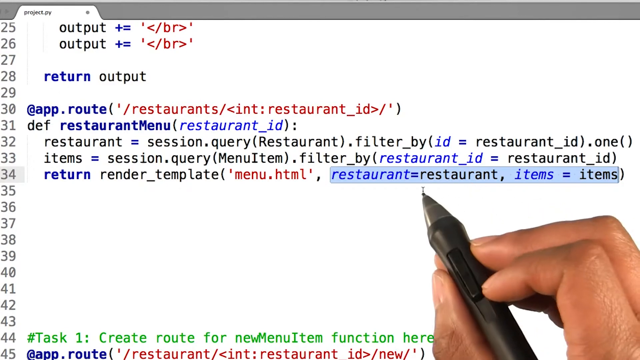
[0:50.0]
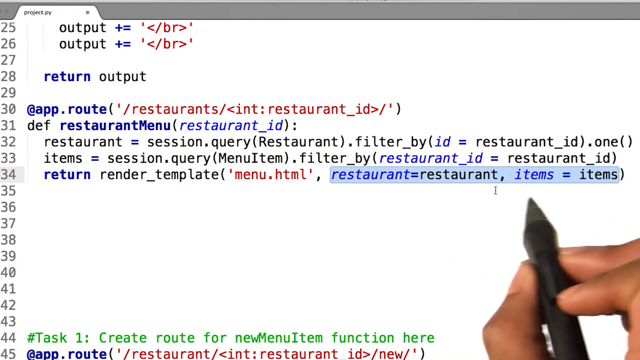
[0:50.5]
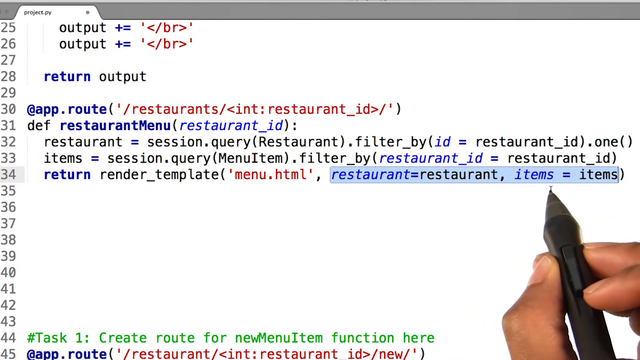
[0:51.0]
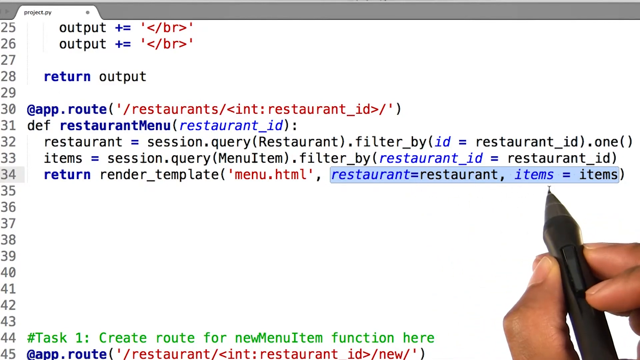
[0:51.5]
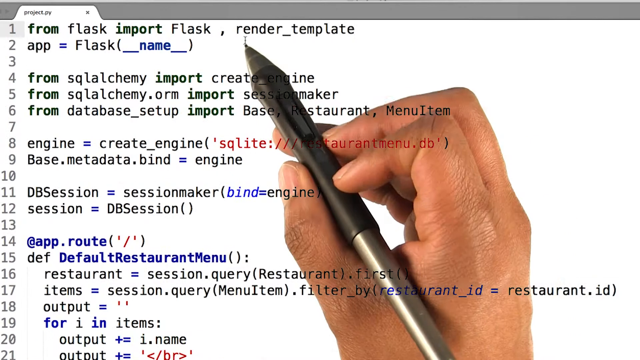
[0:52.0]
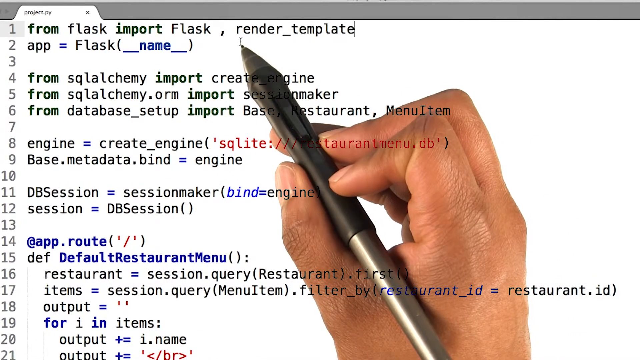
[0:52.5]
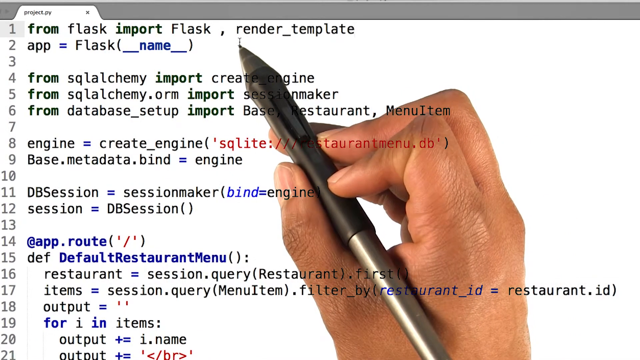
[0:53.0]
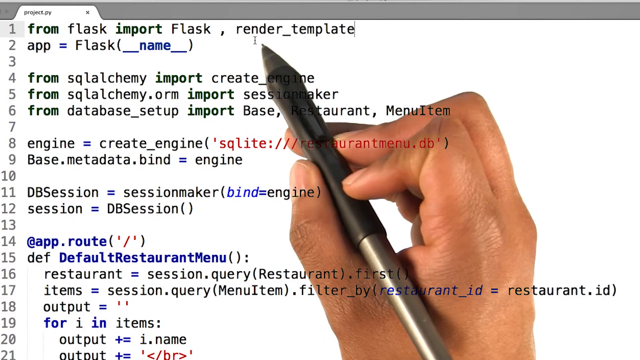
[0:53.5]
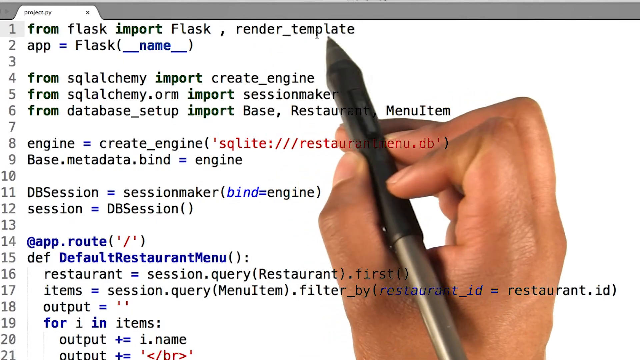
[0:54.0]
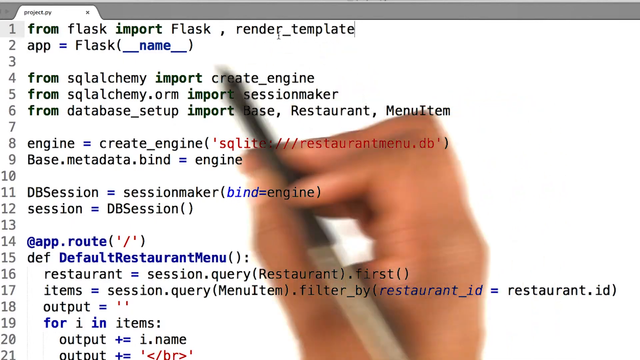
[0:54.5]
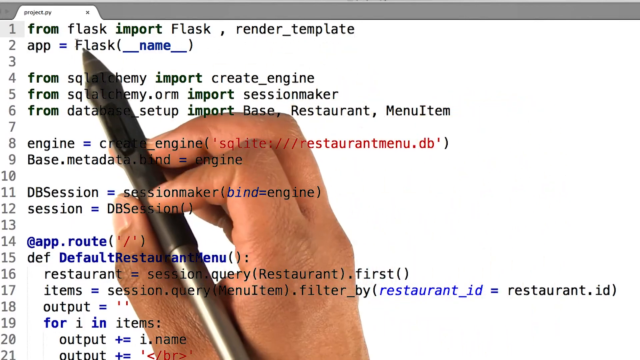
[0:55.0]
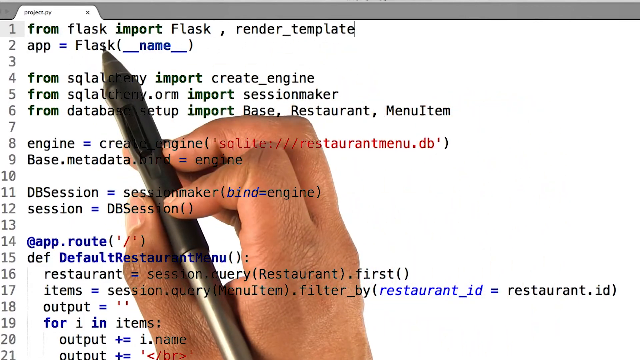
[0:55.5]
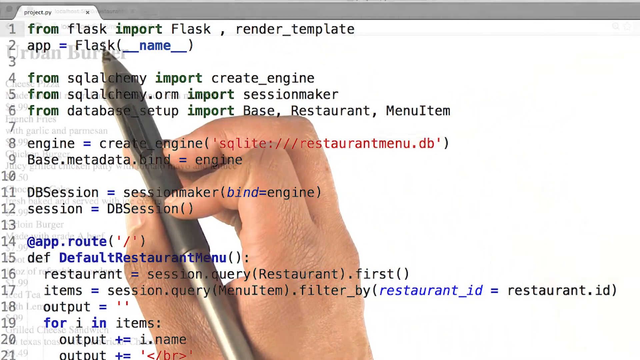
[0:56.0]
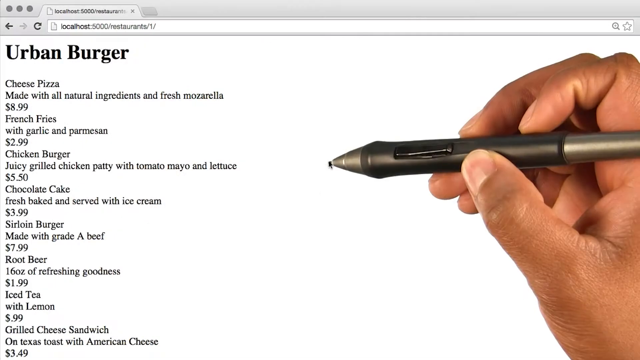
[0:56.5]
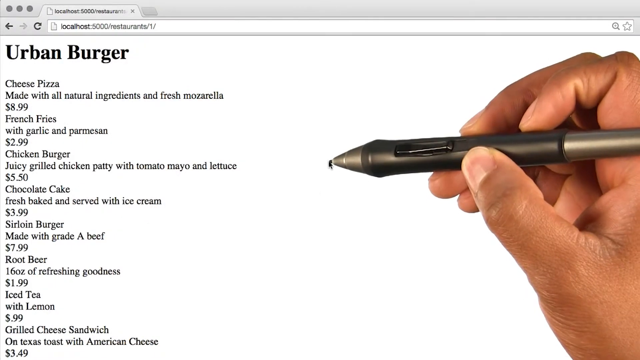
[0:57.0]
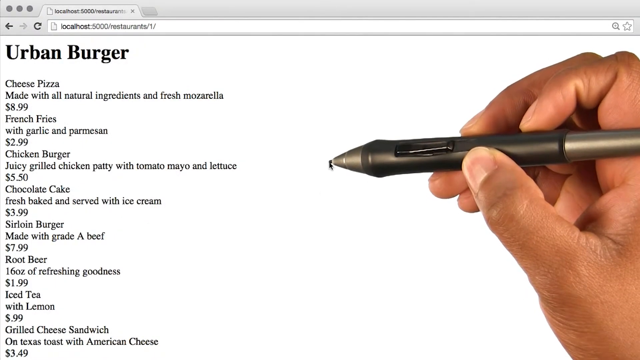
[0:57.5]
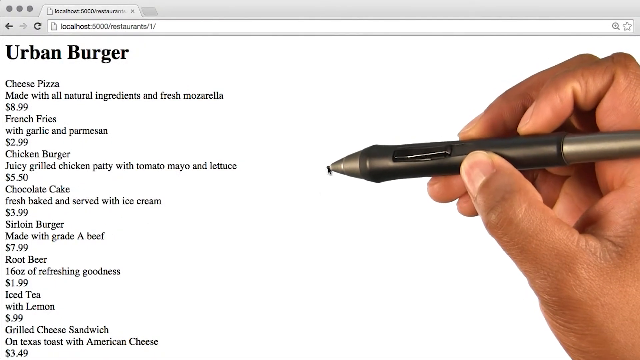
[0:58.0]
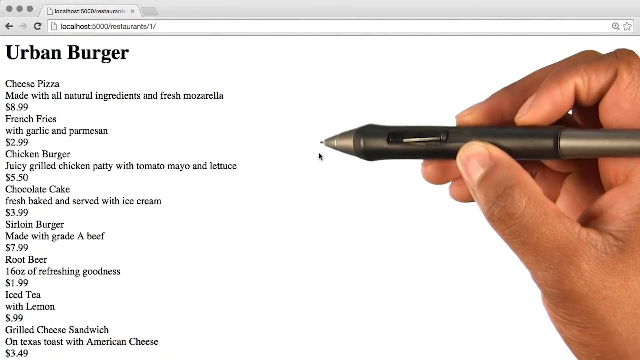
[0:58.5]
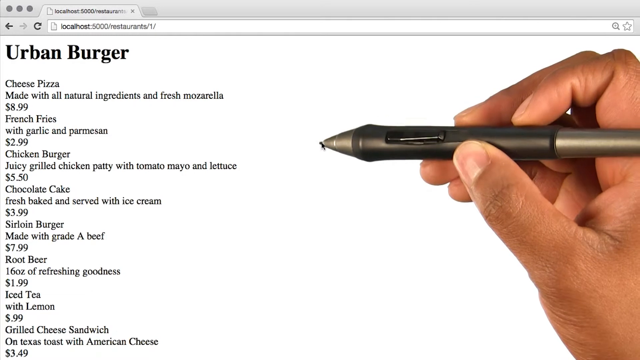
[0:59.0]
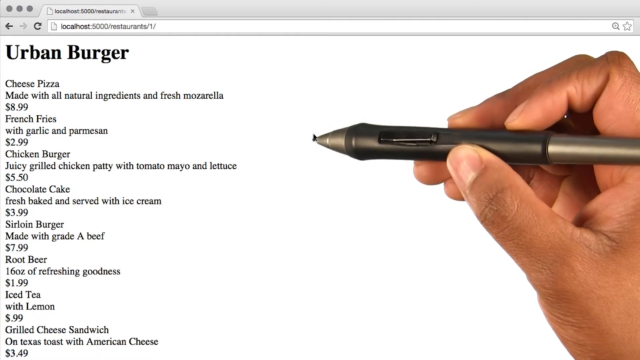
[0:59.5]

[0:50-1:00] The screen shows the code and the pen with the hand overlapping: the pen is on the background plane and the code on the next plane, so they look like they are on top of each other. Parts of the code are underlined one by one. In the notepad, items are selected one by one, and the content relates to the restaurant.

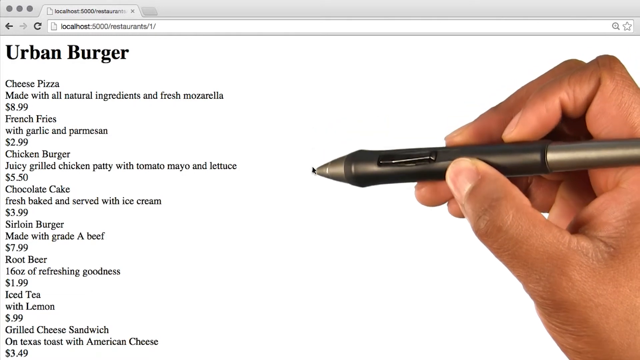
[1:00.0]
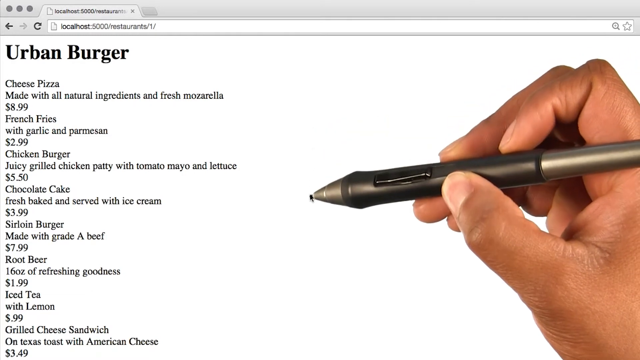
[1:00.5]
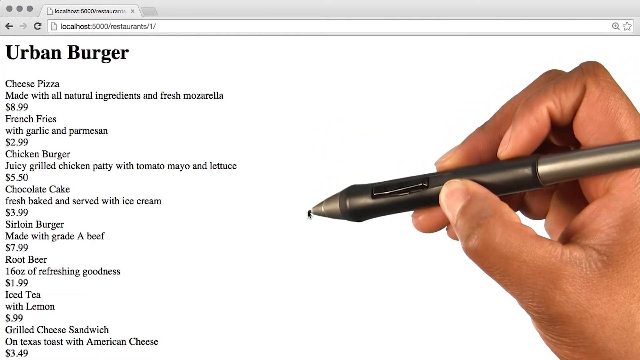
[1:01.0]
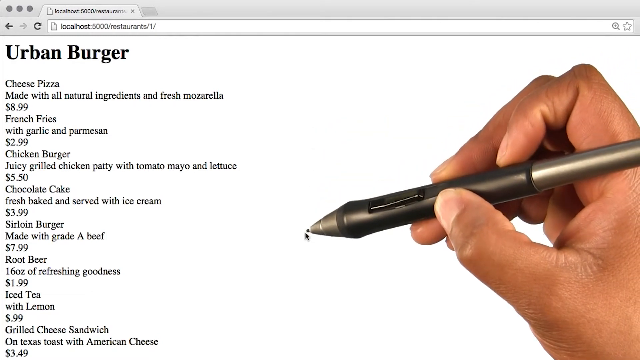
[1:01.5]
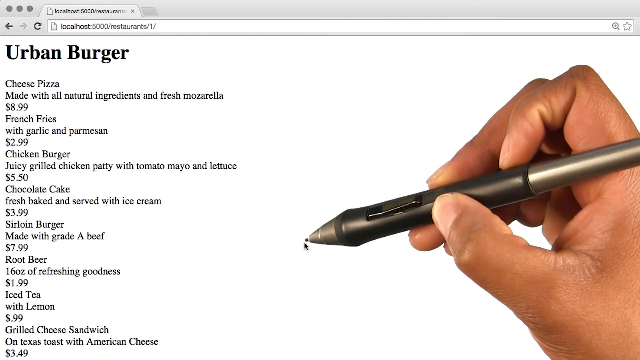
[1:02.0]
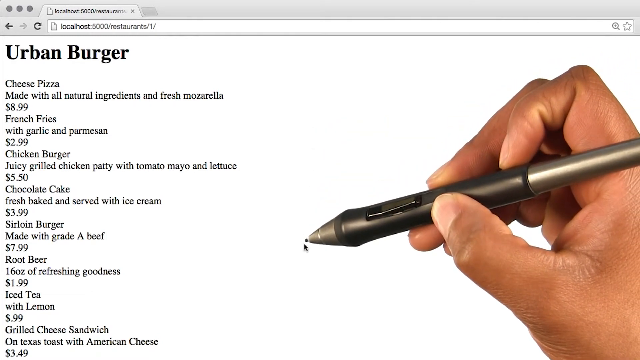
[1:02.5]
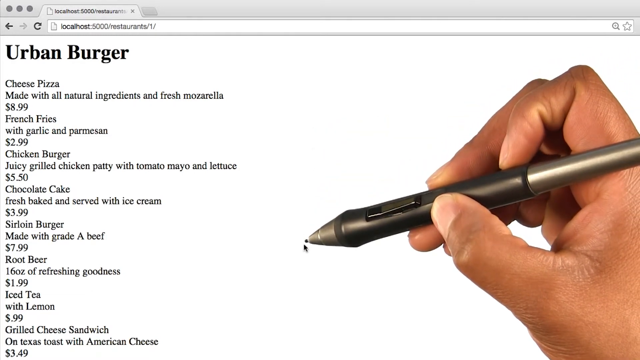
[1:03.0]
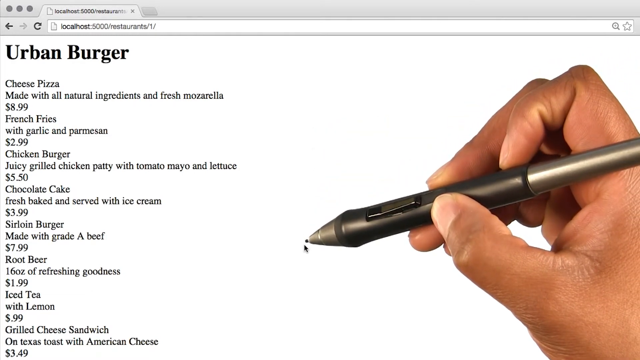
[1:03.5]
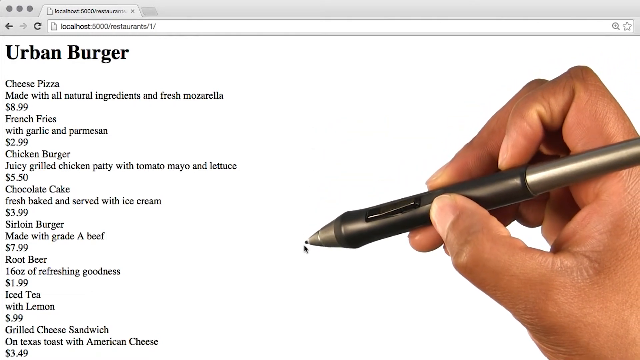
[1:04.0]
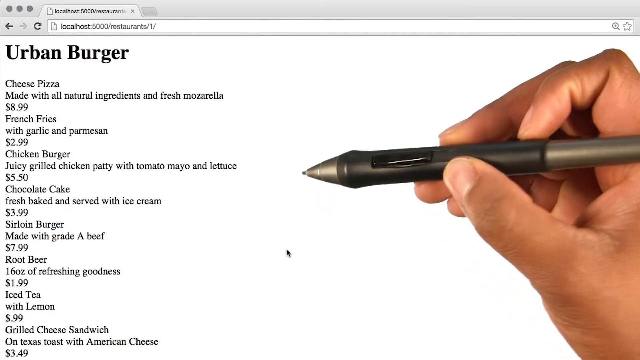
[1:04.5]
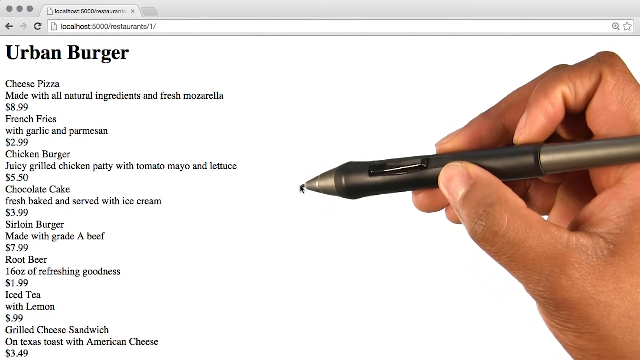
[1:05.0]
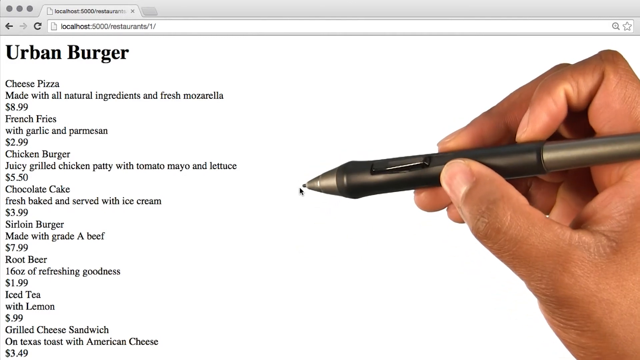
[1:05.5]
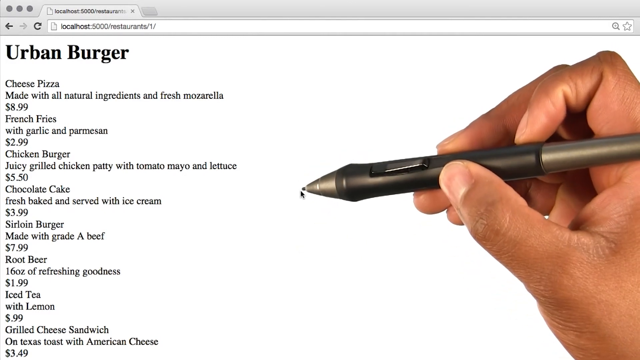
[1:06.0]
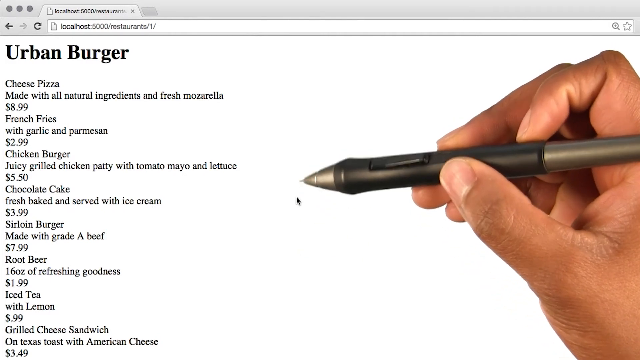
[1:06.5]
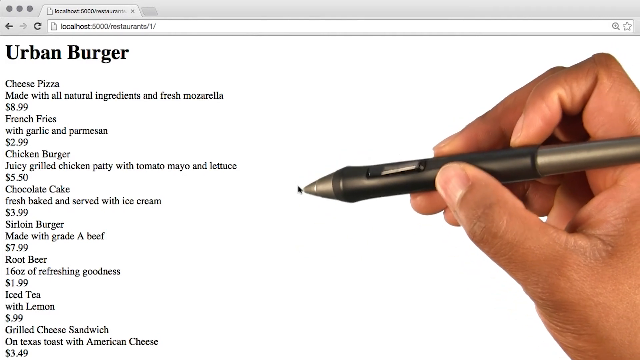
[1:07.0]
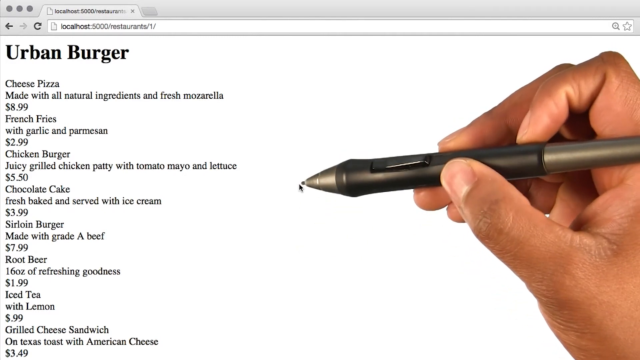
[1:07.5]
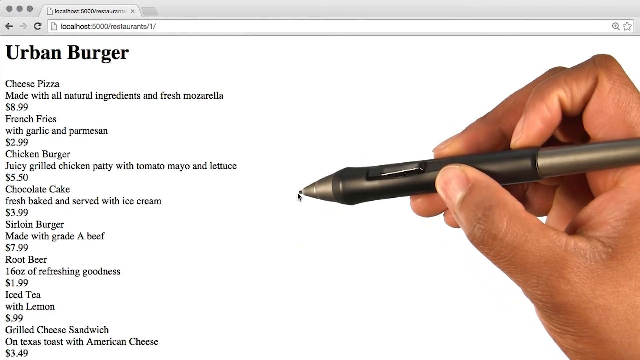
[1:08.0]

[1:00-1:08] In the notepad, the pen moves down slowly, and the mouse cursor moves down slowly at the tip of the pen, showing that the pen serves as the mouse cursor and is used as a substitute for the mouse.